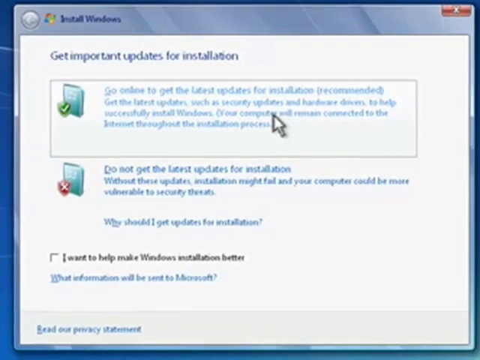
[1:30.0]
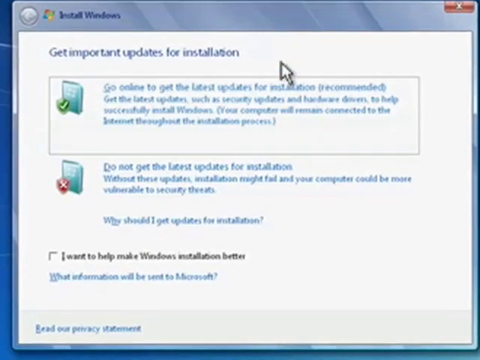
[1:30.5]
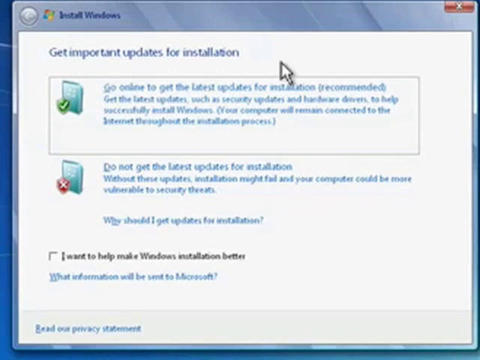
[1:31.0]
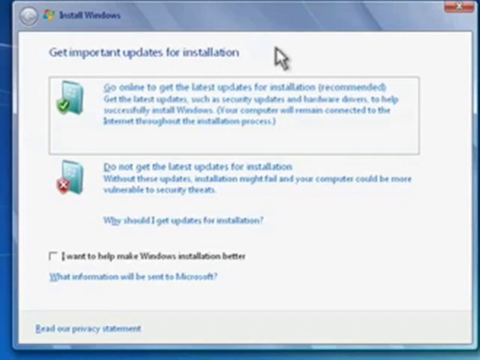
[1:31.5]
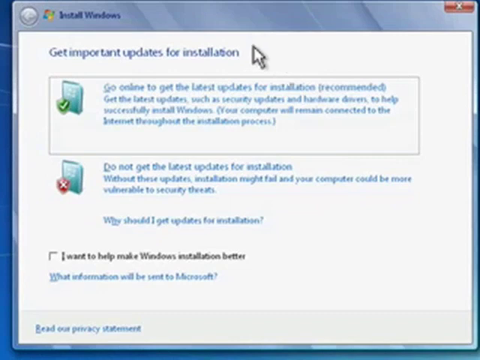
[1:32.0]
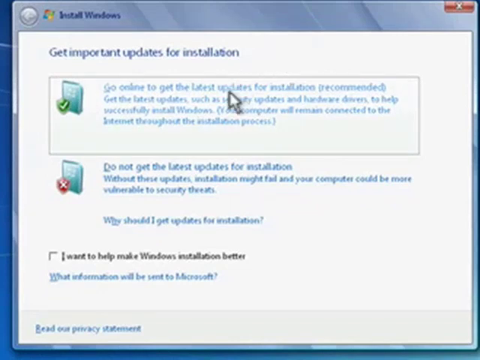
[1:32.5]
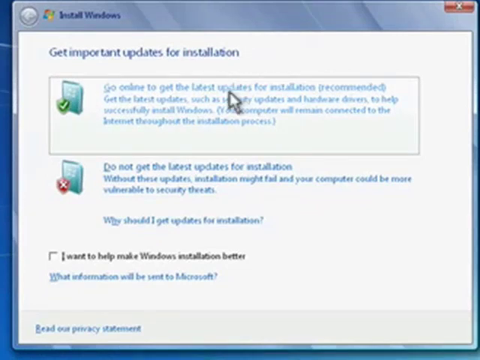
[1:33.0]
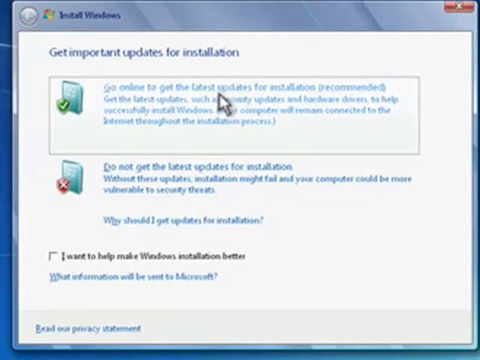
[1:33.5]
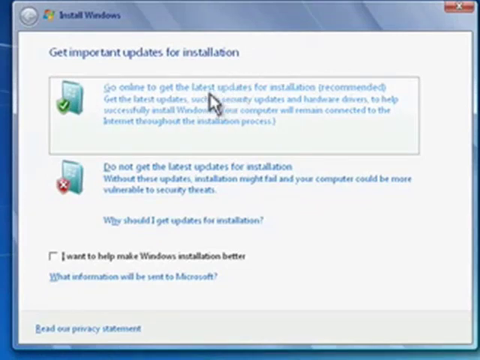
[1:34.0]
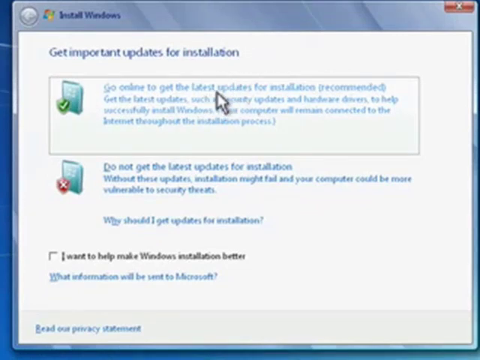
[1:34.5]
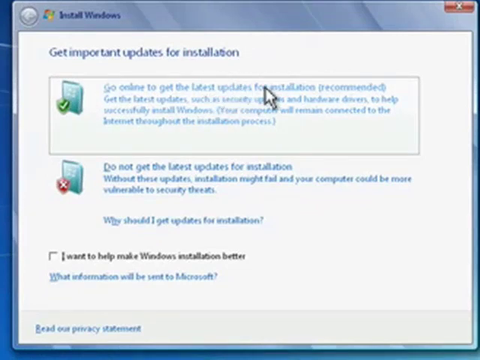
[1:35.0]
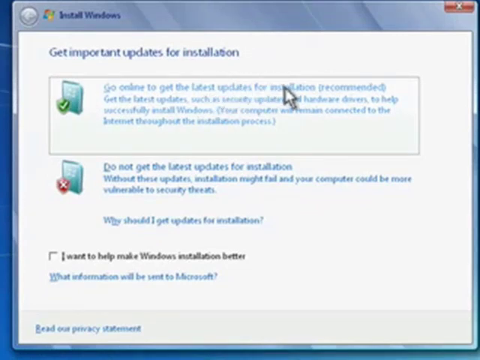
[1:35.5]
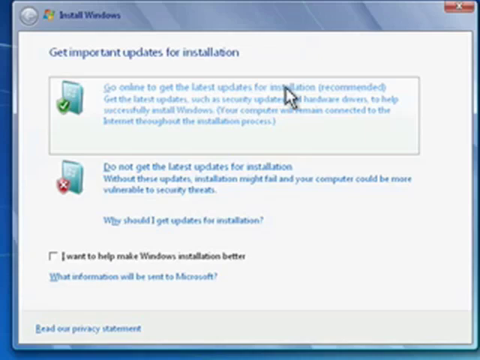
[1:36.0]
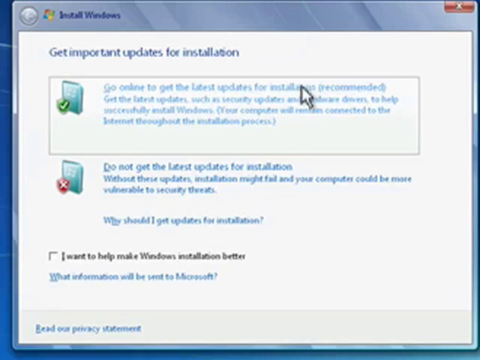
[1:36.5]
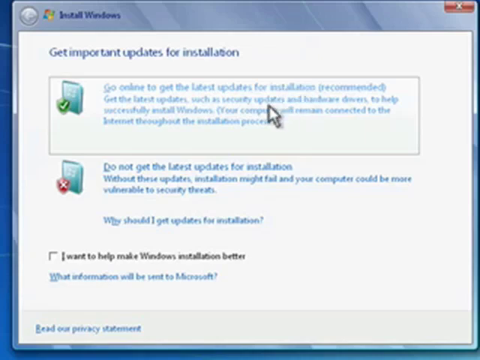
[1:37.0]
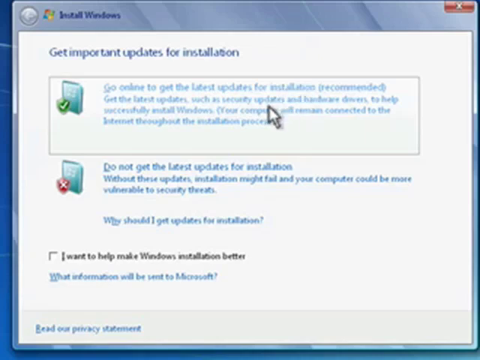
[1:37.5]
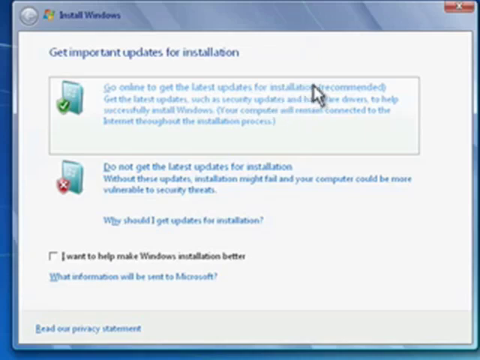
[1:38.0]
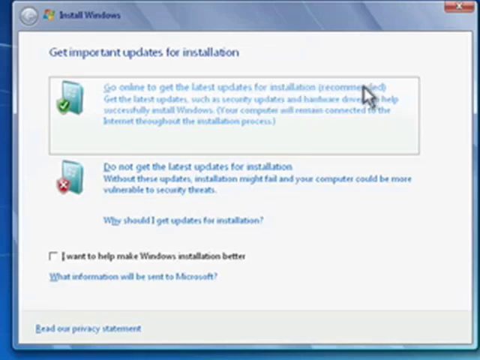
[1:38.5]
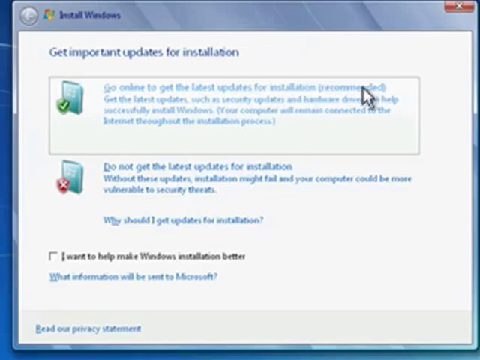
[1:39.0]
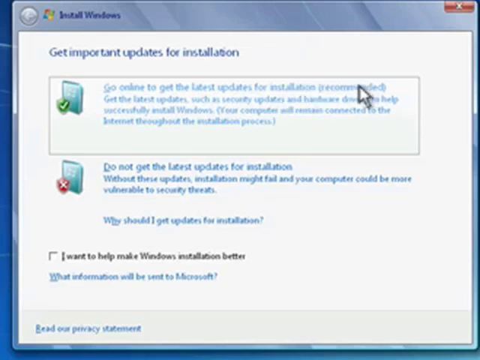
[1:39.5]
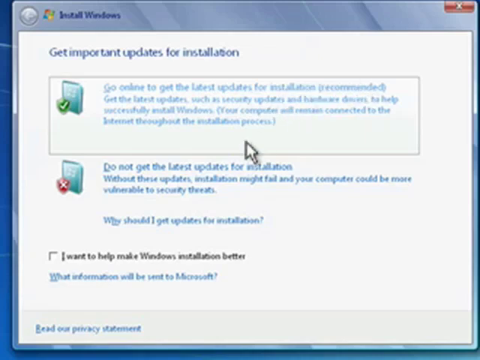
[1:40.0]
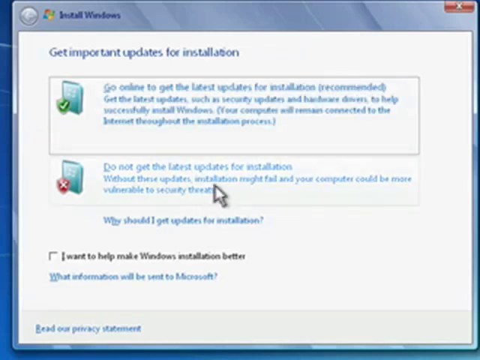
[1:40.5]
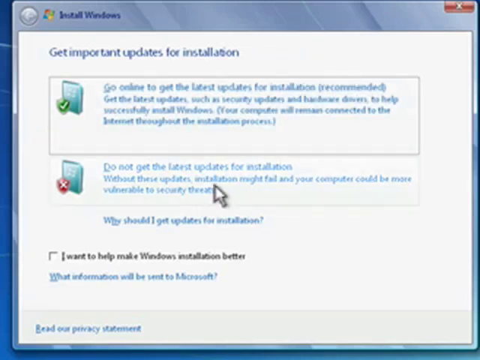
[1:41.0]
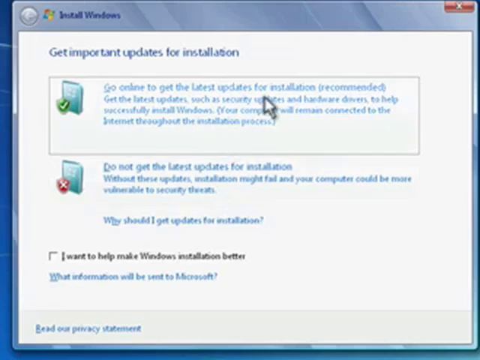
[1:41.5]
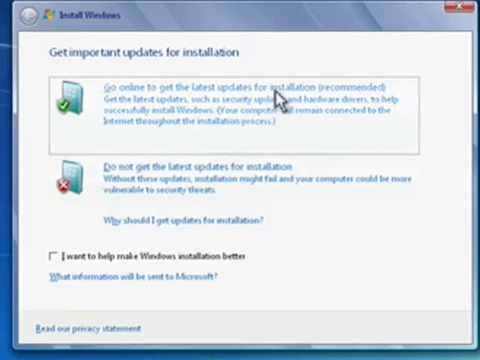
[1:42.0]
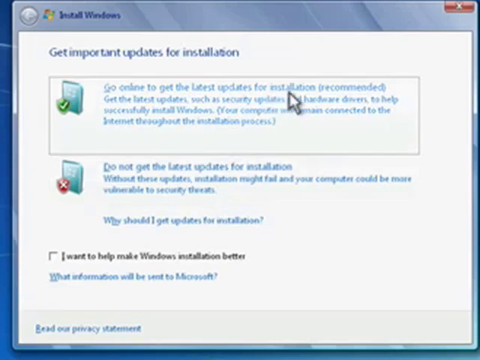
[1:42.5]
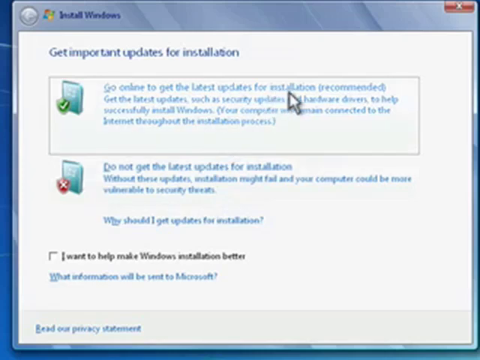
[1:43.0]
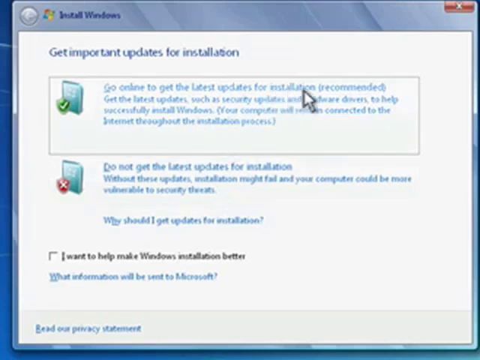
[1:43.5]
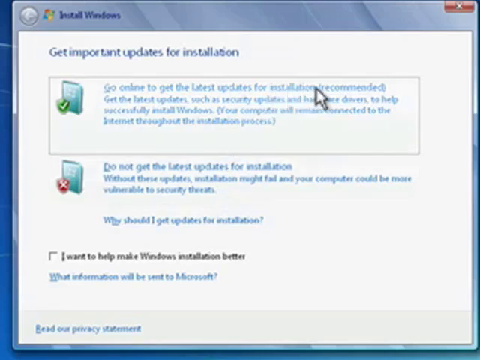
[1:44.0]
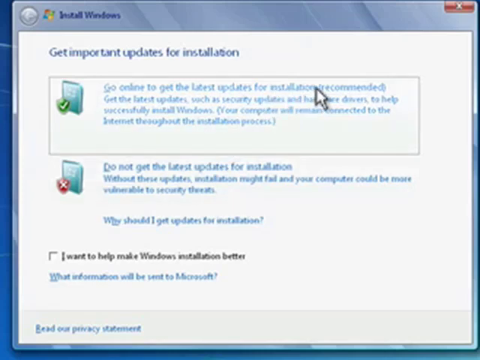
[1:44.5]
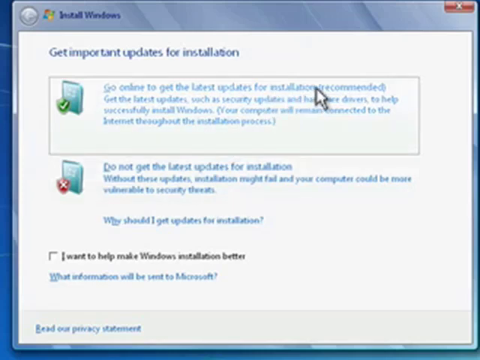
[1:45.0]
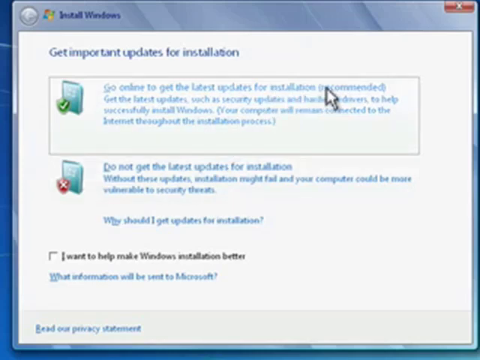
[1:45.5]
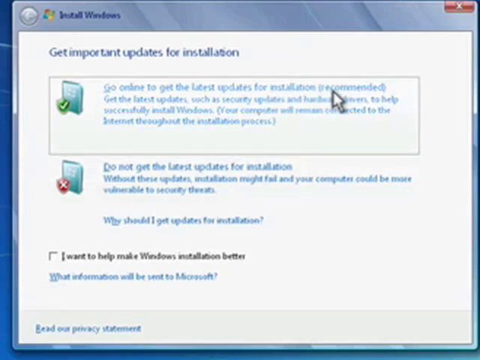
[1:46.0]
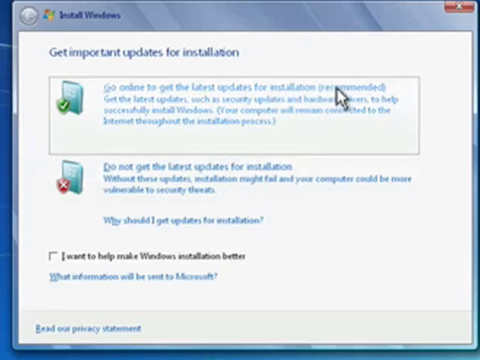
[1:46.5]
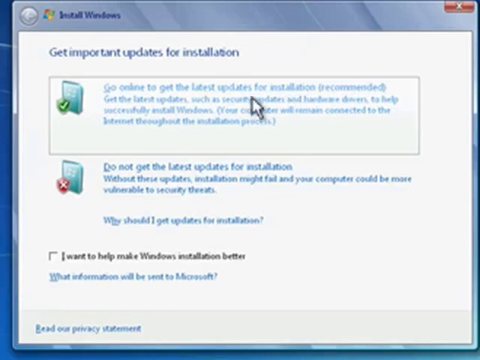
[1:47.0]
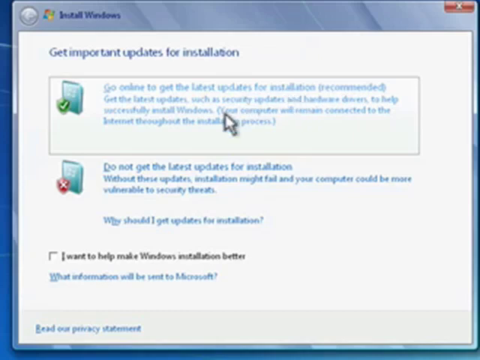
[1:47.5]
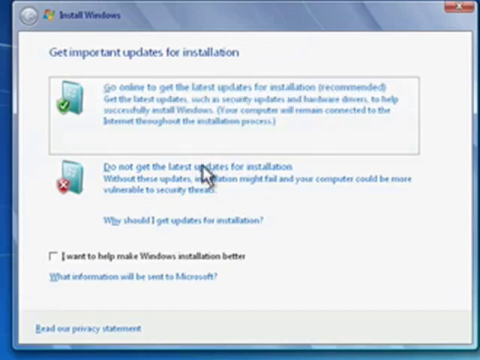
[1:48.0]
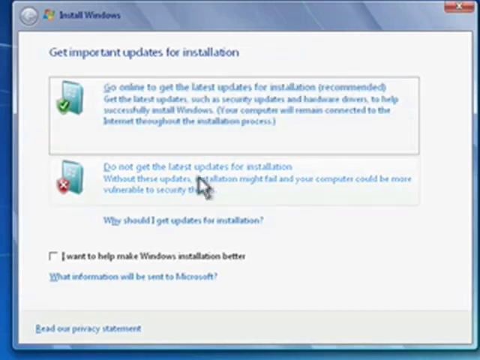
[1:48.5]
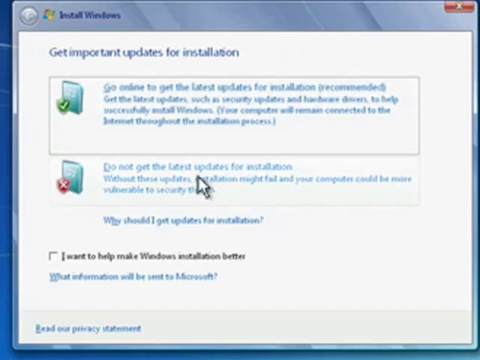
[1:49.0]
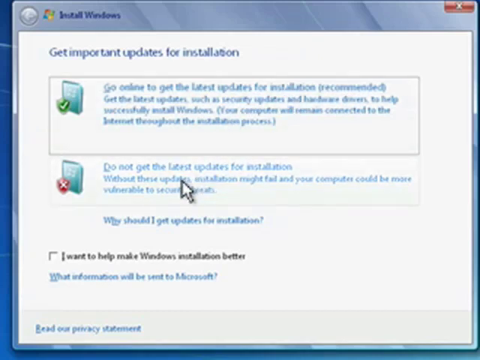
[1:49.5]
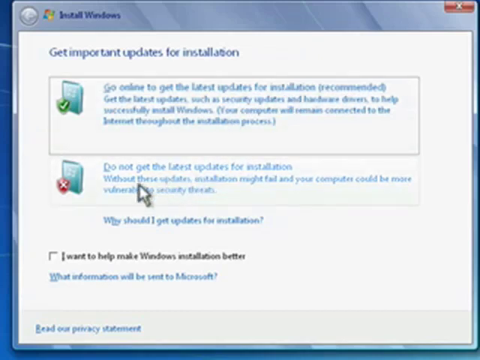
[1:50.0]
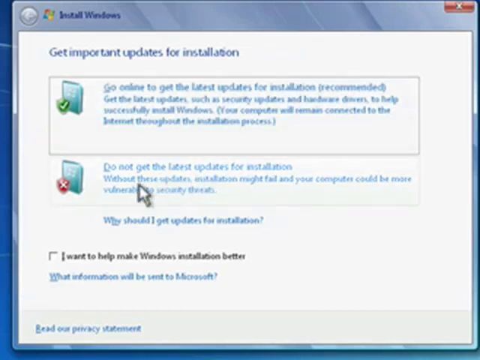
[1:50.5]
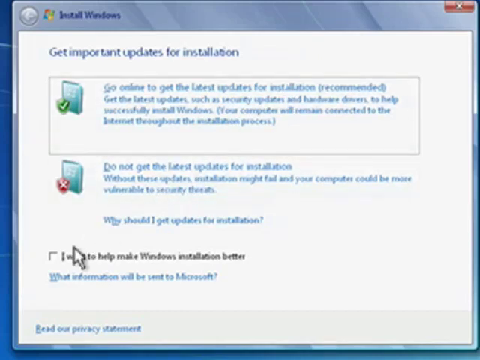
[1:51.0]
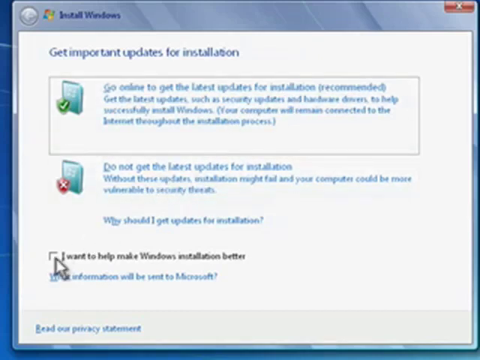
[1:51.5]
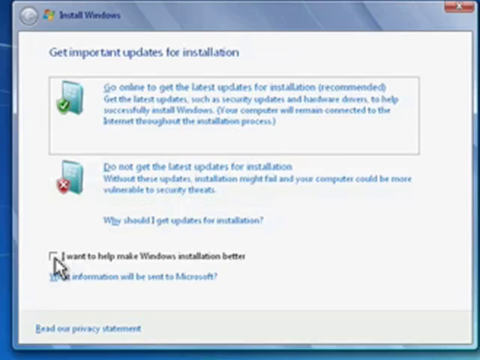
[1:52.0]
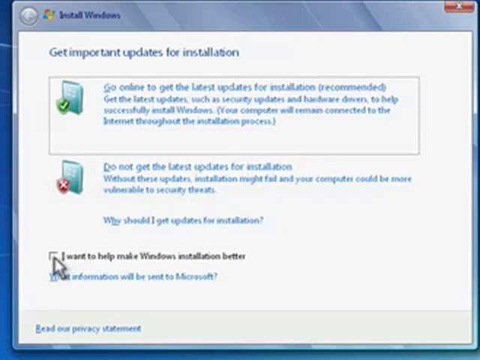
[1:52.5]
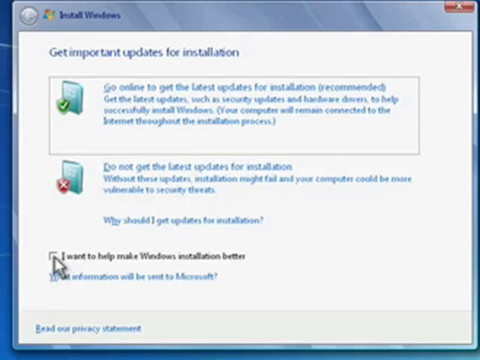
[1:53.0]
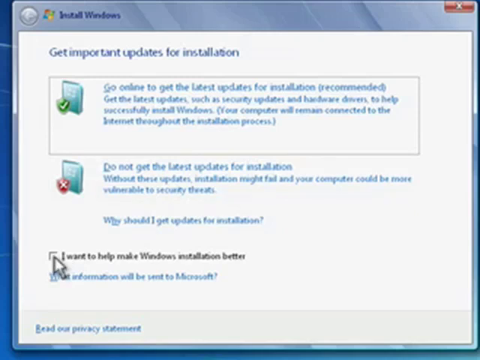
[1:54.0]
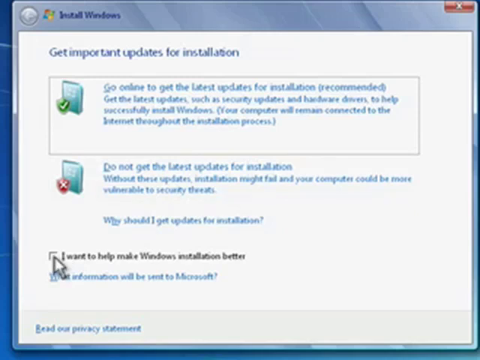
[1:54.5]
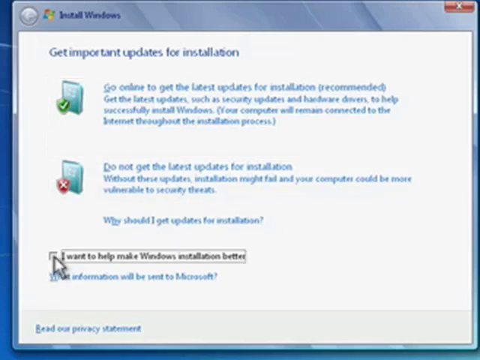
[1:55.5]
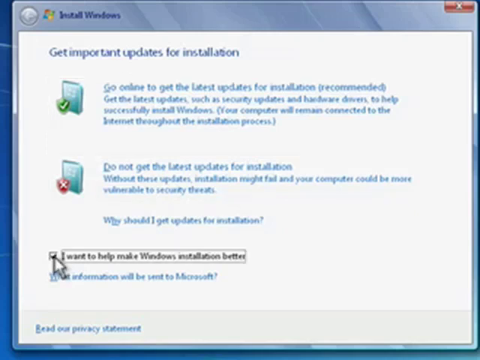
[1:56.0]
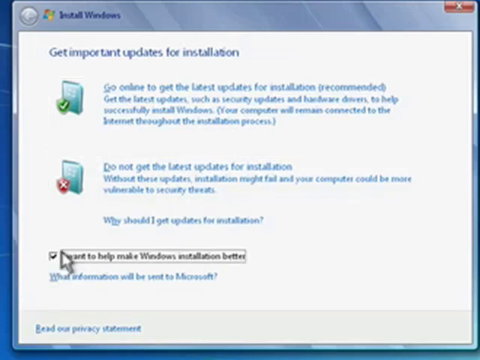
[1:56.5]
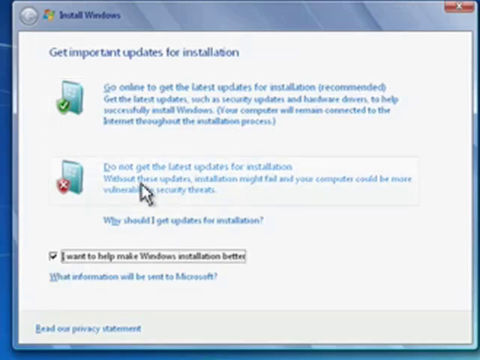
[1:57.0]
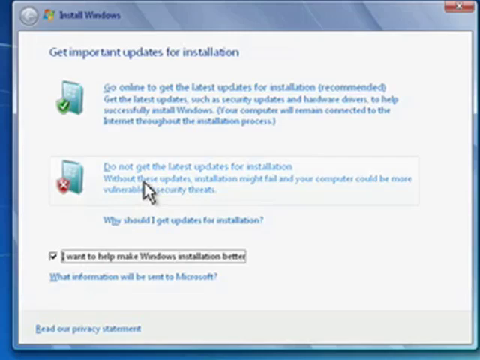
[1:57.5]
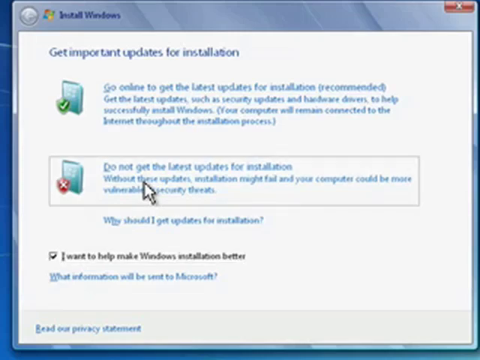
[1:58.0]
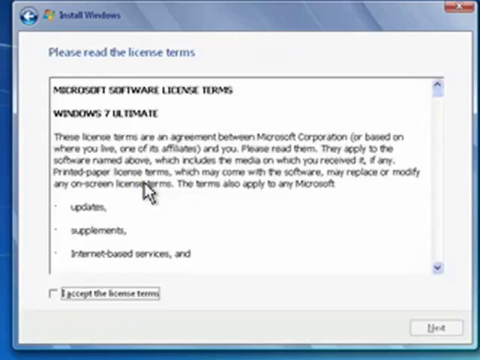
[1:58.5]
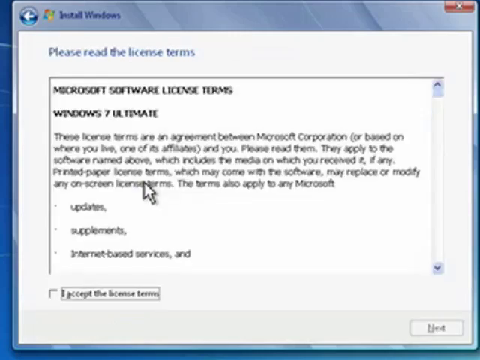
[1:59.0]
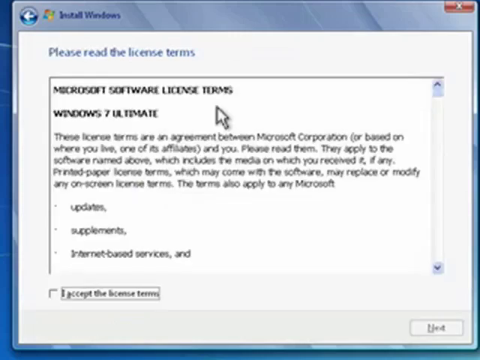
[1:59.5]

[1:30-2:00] During the Windows 7 installation, a box pops up that says "get important updates for installation." Below it, a paragraph in a box says "go online to get the latest updates for installation" and "recommended get the latest installations security updates and hardware drivers," with more text. Another option says "do not get the latest updates for installation," and there is a link that says "why should I get updates for installation." A checkbox says "I want to help make a Windows installation better," and at the bottom is "what information will be sent to Microsoft." The person, who is not visible, moves the white pointer cursor around the page over each box, seemingly focusing more on the top option for getting updates, and then clicks on "I want to help make Windows installations better."